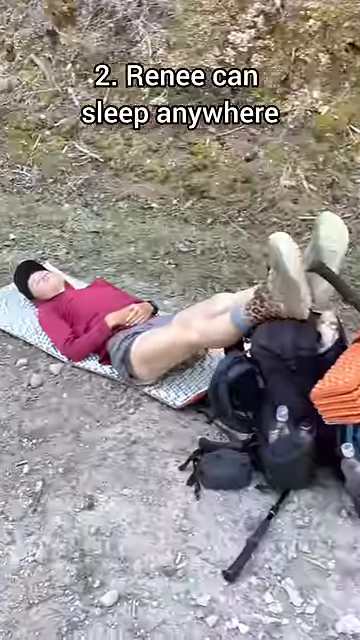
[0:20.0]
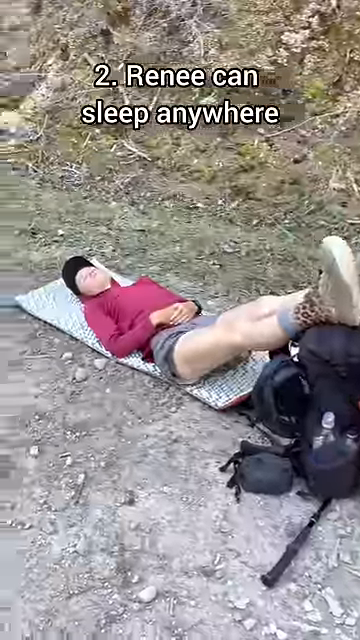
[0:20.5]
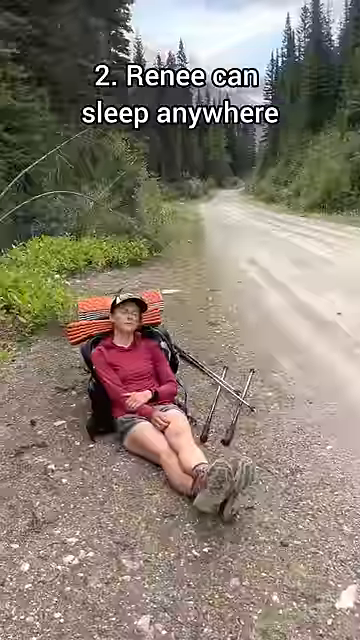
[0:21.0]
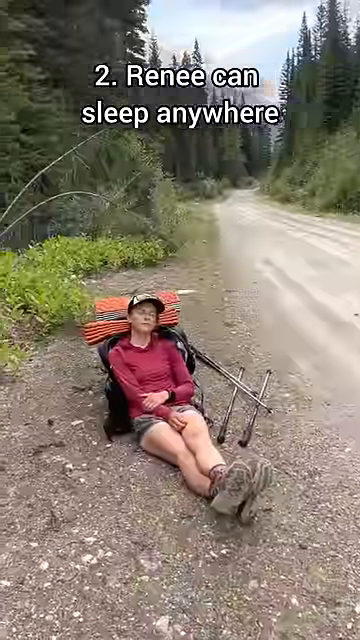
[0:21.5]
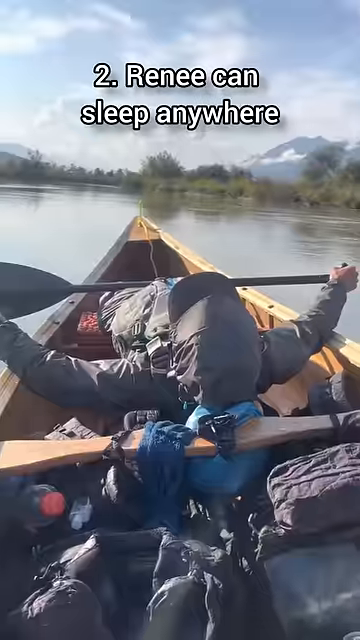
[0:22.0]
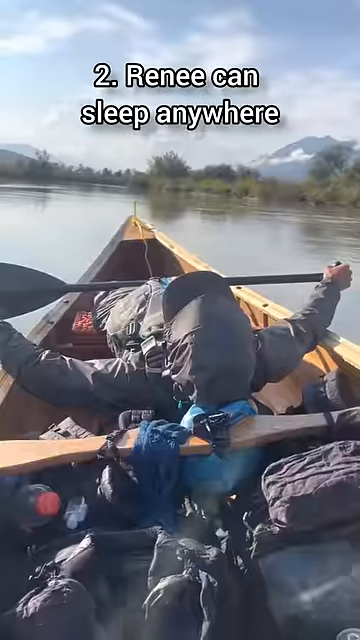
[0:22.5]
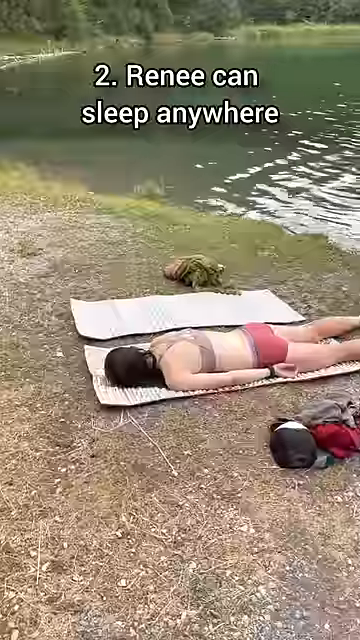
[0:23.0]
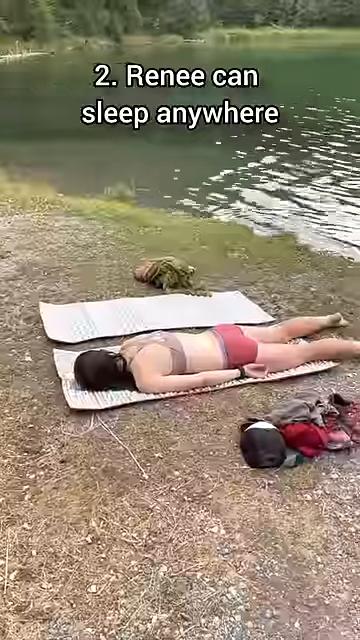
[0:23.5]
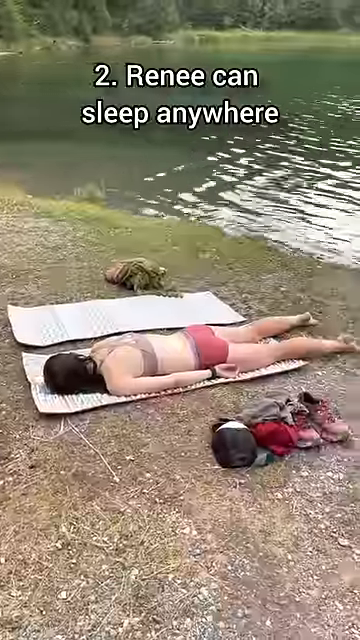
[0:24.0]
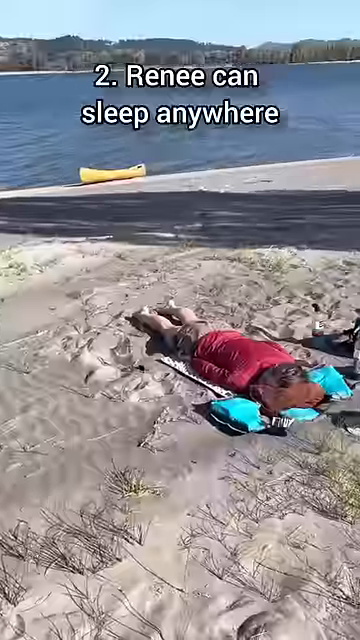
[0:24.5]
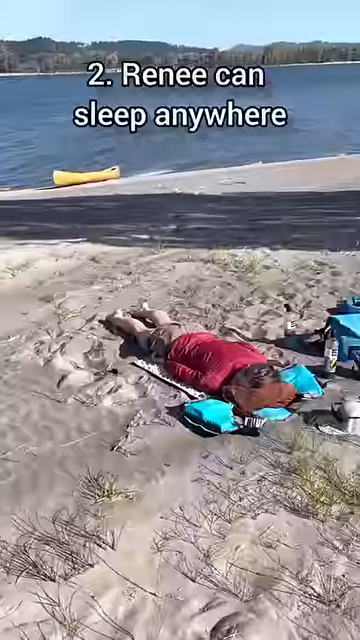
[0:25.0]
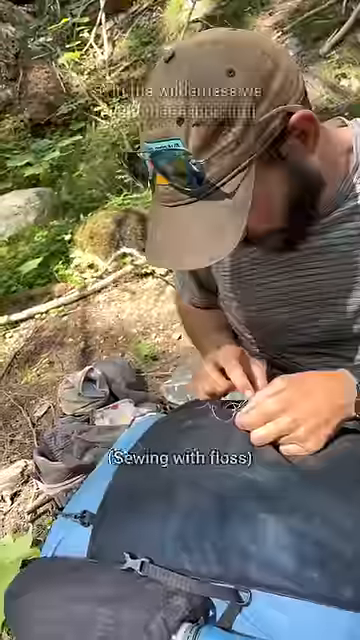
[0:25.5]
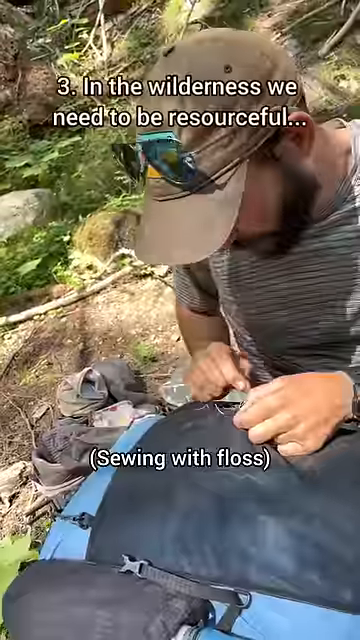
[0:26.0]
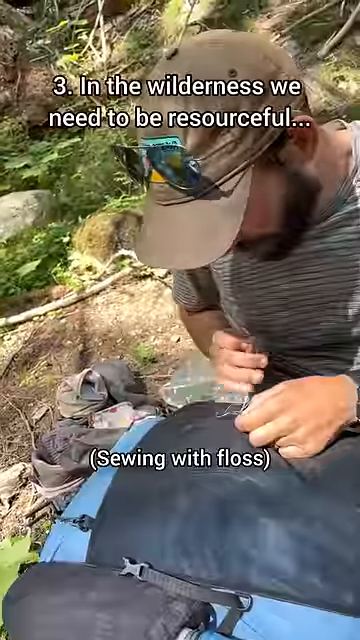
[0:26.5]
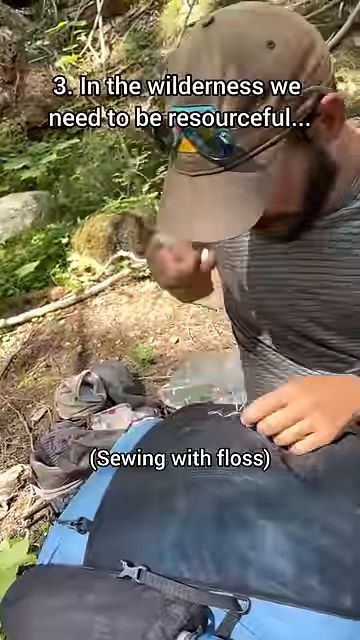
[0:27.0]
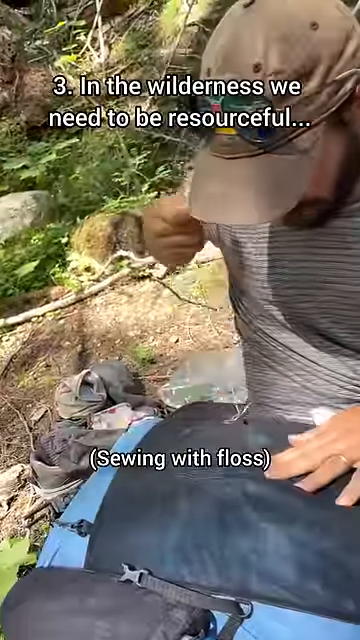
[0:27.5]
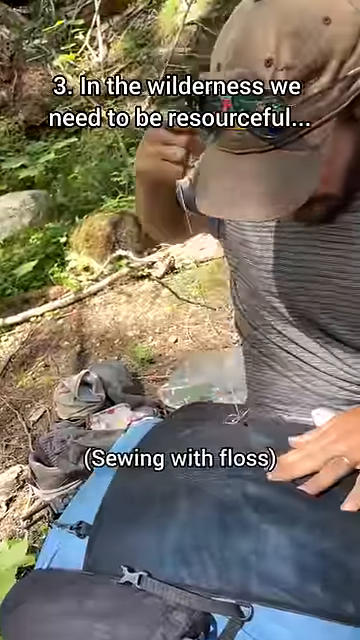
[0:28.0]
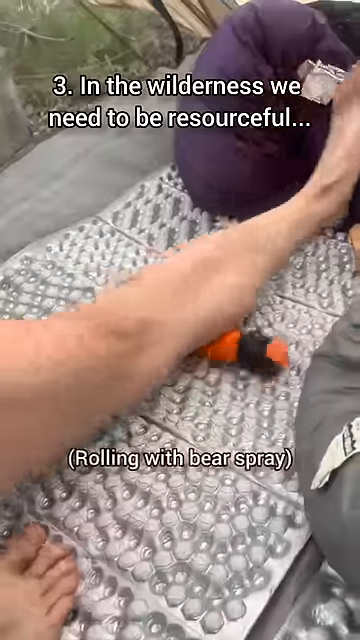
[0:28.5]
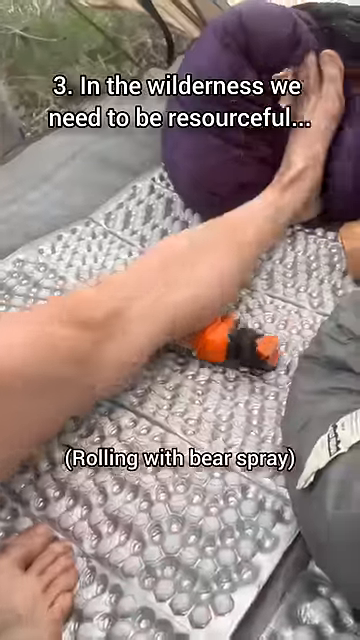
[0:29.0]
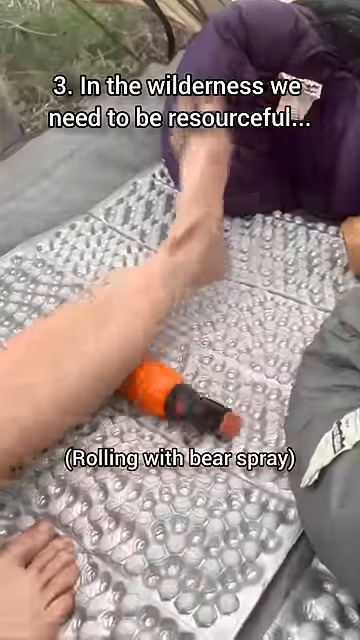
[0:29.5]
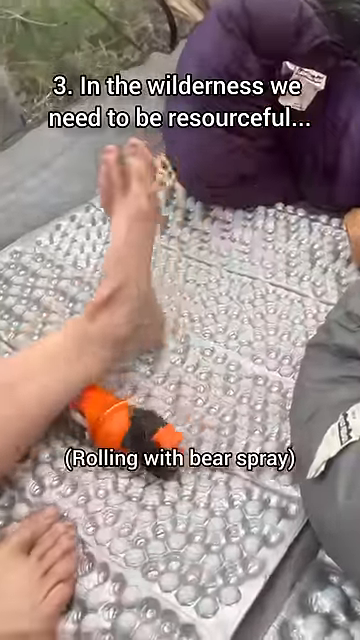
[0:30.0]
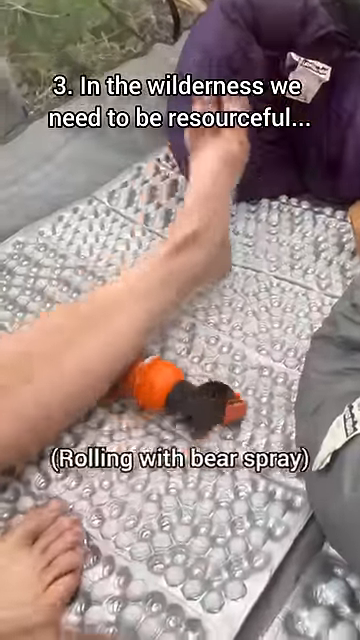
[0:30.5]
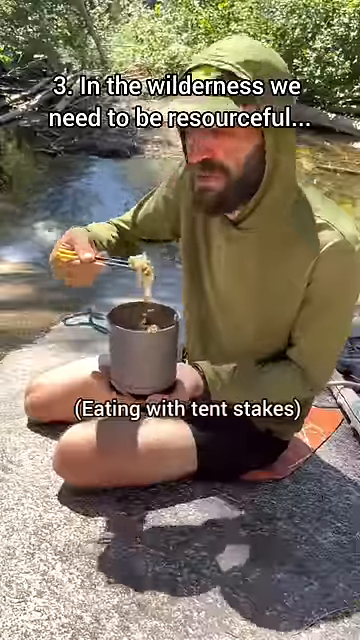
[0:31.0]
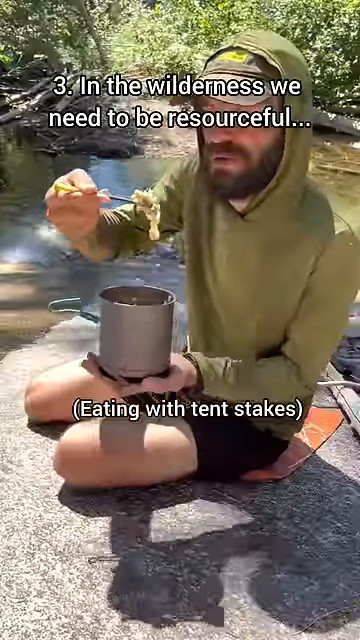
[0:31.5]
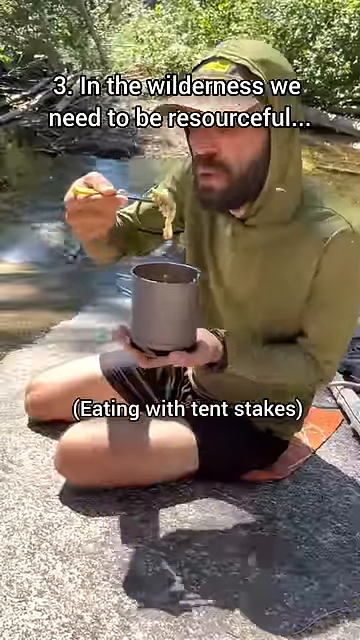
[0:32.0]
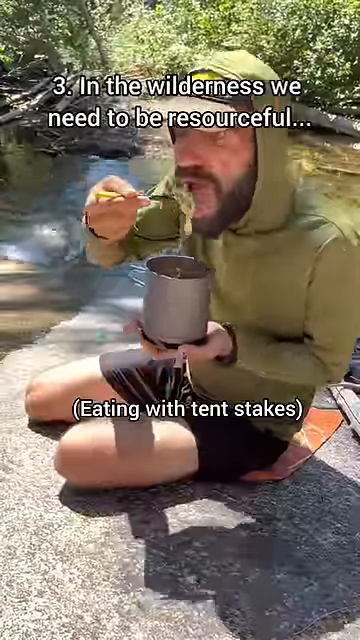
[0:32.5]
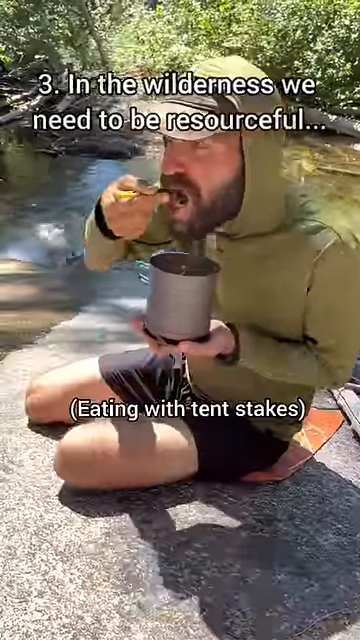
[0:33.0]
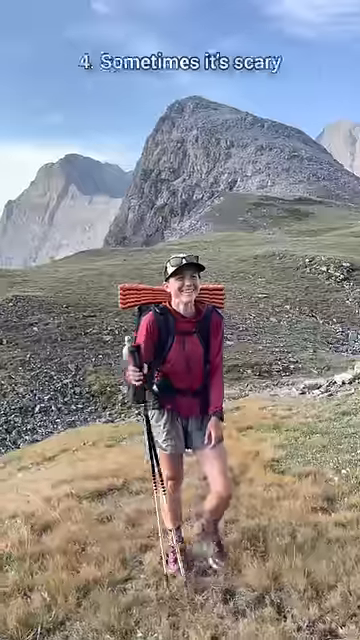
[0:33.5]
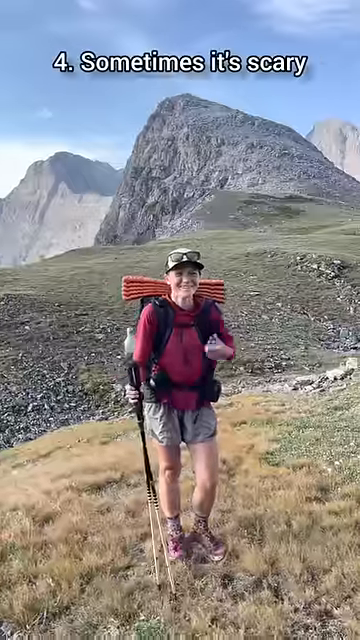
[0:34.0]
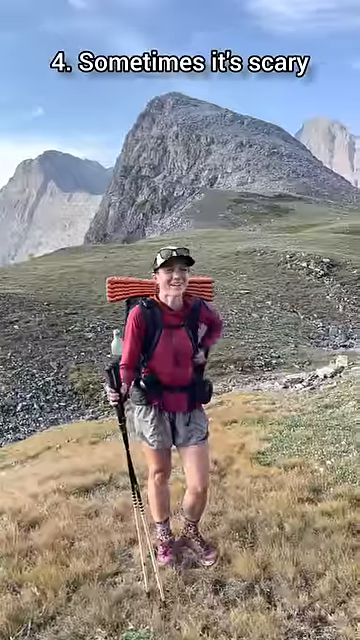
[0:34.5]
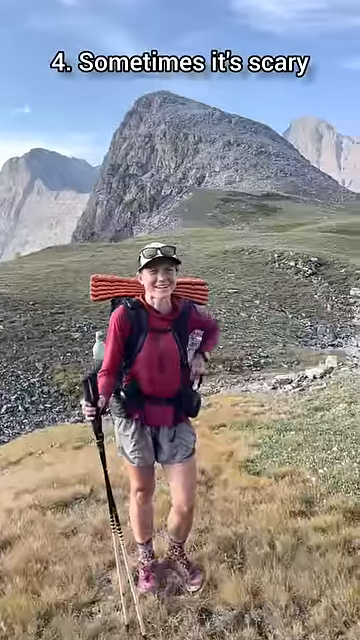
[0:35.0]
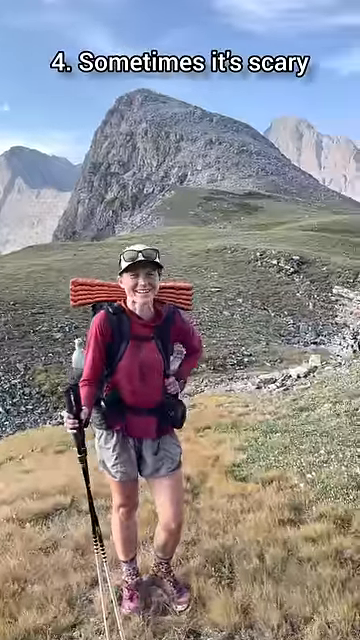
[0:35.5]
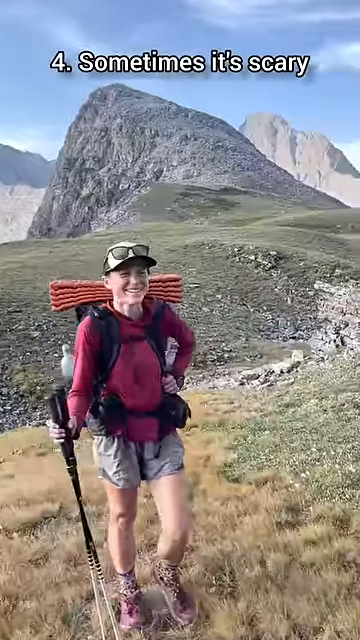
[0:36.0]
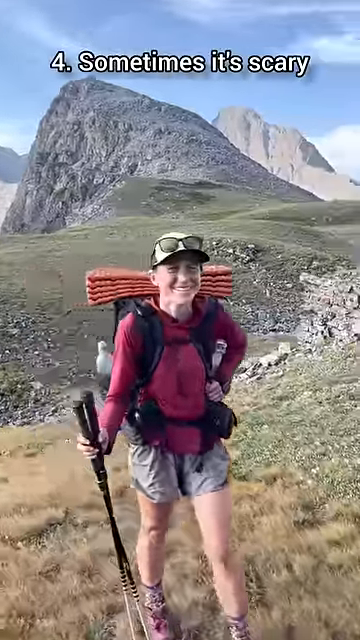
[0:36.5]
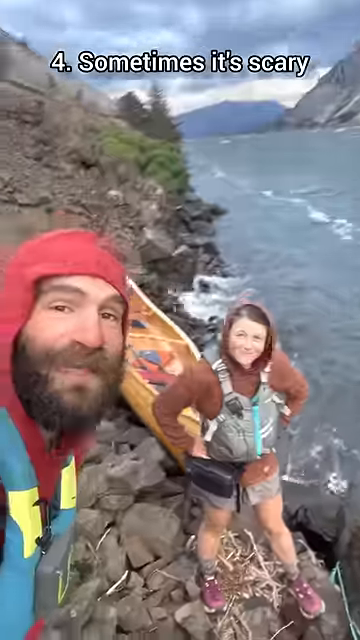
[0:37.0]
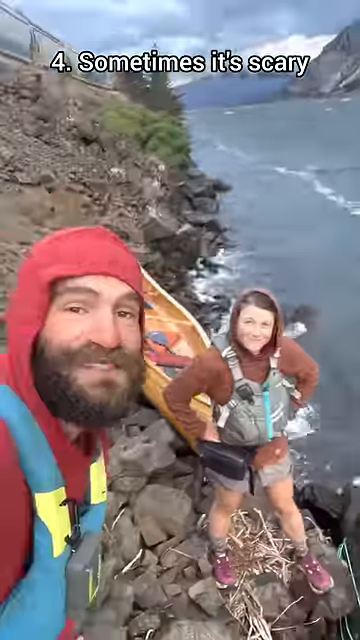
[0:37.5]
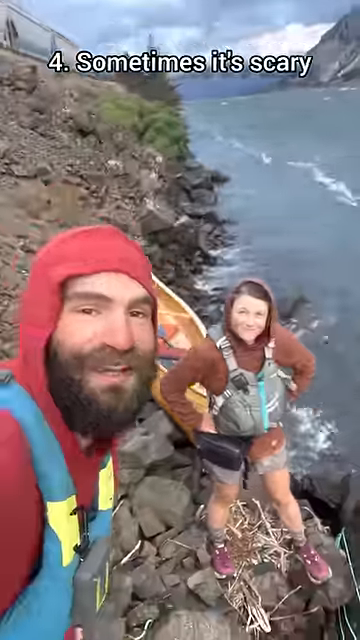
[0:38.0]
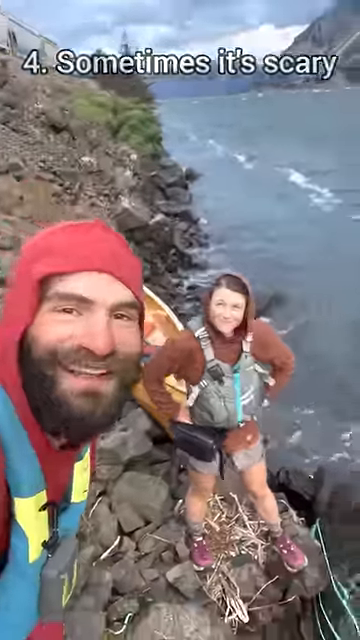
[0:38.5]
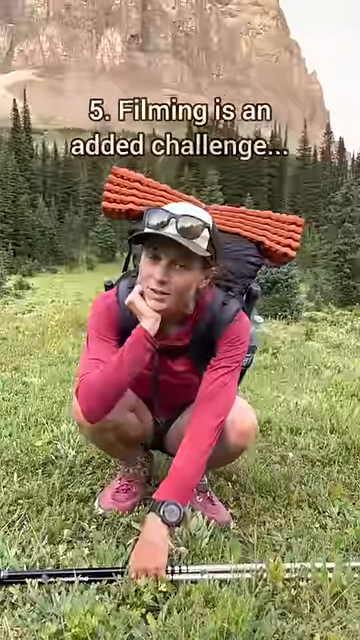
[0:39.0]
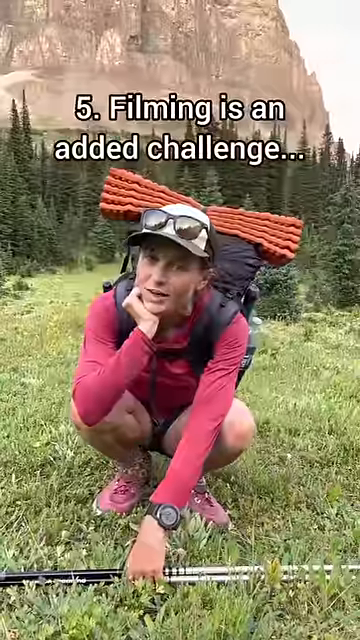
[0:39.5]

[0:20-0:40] Somebody is sleeping, then somebody else is sleeping. What looks like a man and a woman do some exercises and eat out of a camping pot next to rolling water, a river. Text reads "Renee can sleep anywhere," and then Renee is shown sleeping. Text mentions "eating with tent stakes," though the utensil does not look like a tent stake; they are clearly outdoors. Further text reads "filming is an added challenge" and "in the wilderness, we need to be resourceful." Someone appears to be sewing, probably a rip in some clothing or material, with text mentioning "sewing with dental floss," followed by "sometimes it's scary." Various shots show the two people at different stages of their trip, sleeping, exercising, eating and standing around.